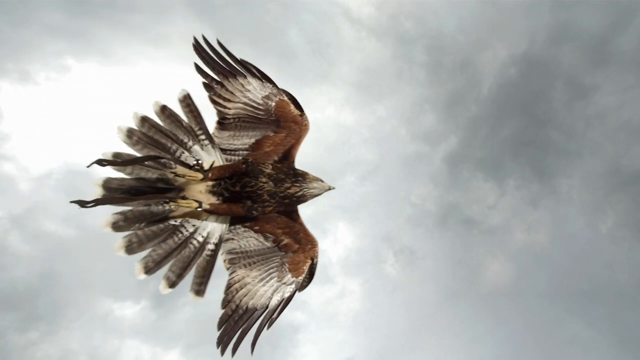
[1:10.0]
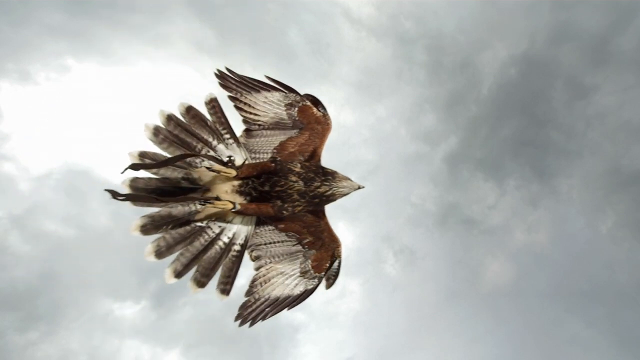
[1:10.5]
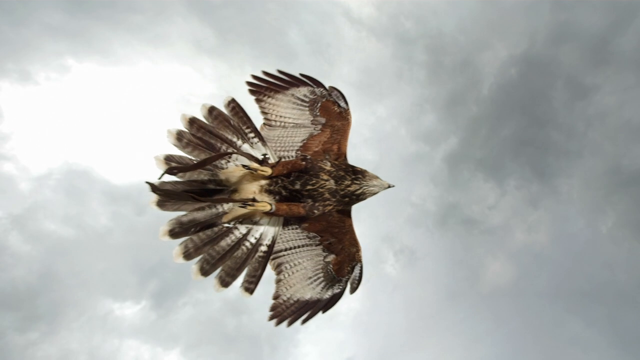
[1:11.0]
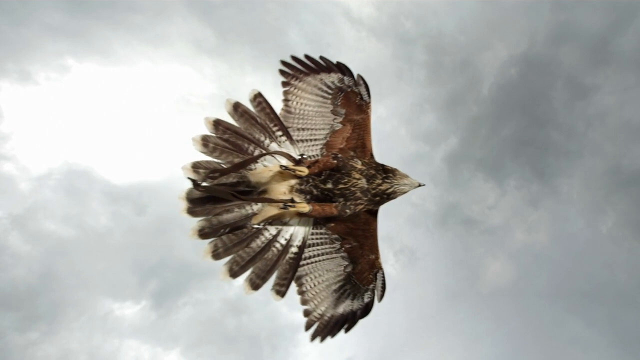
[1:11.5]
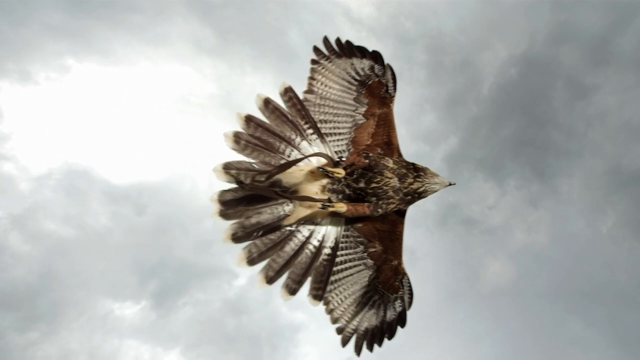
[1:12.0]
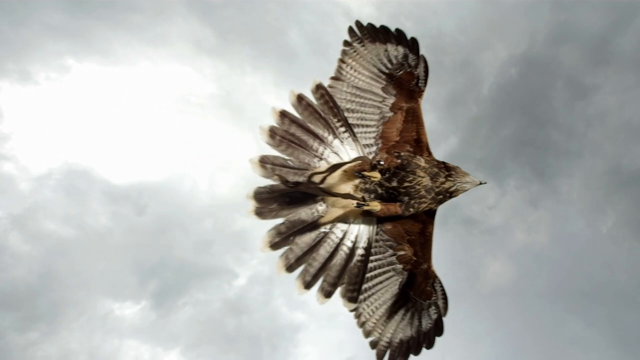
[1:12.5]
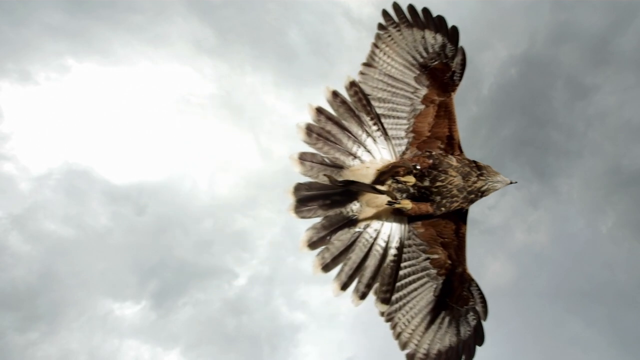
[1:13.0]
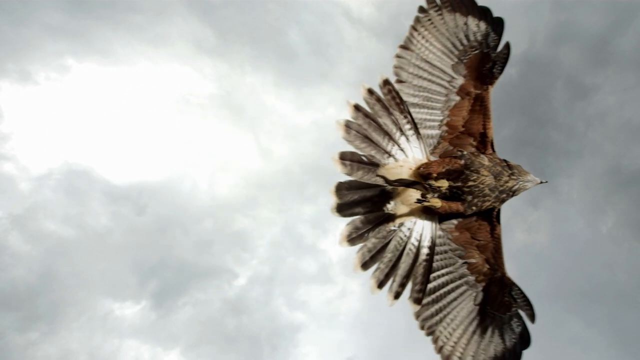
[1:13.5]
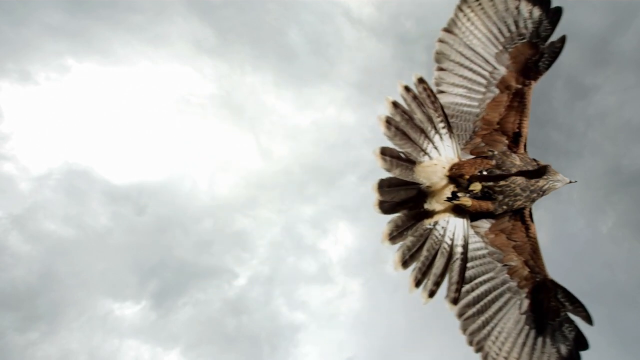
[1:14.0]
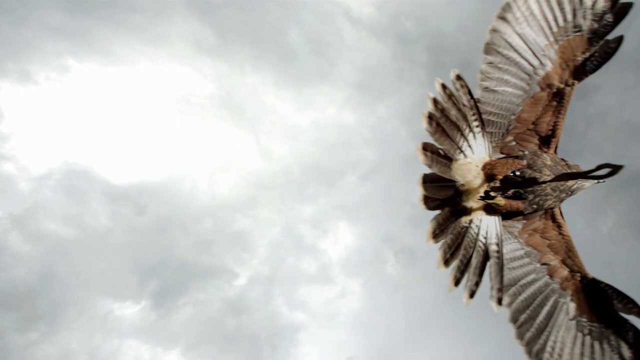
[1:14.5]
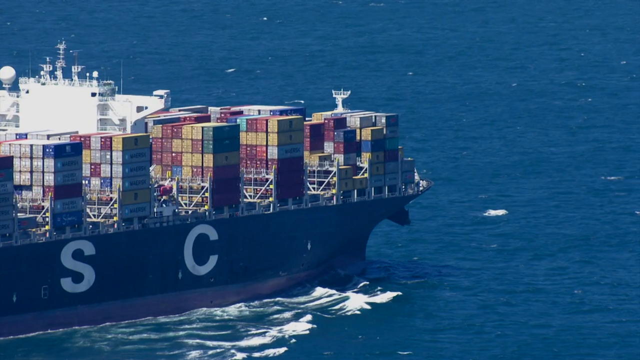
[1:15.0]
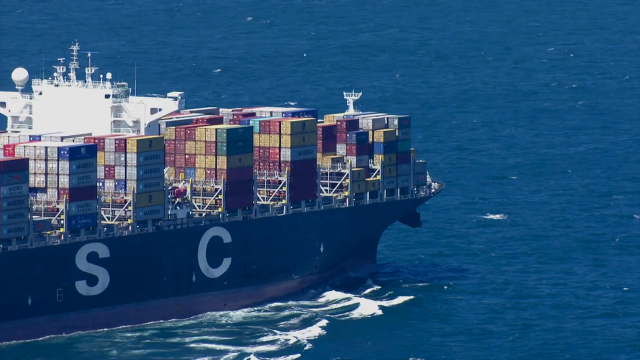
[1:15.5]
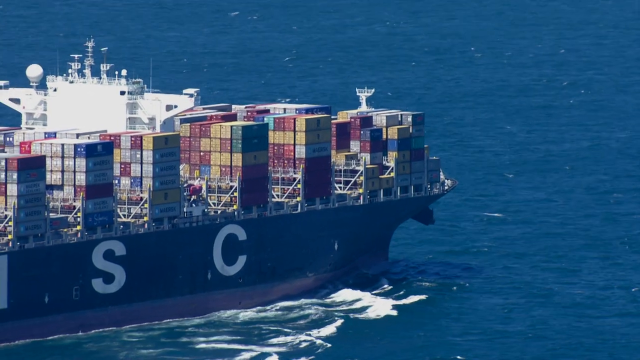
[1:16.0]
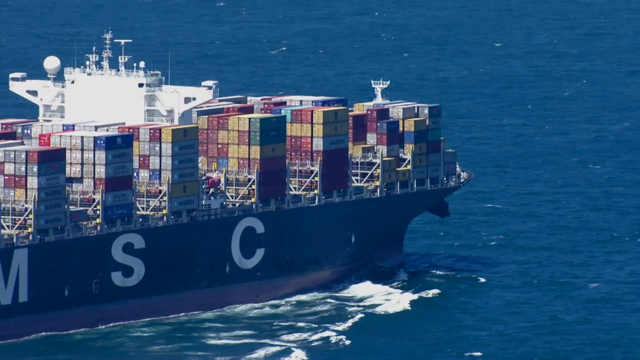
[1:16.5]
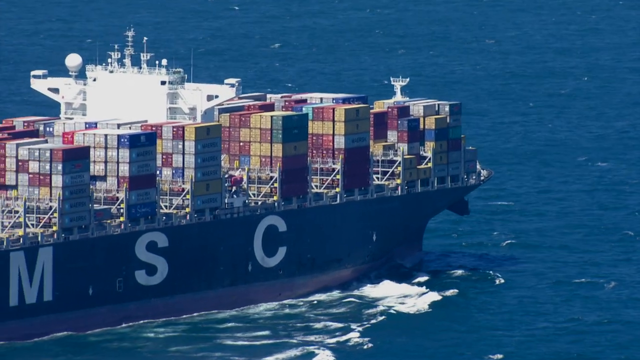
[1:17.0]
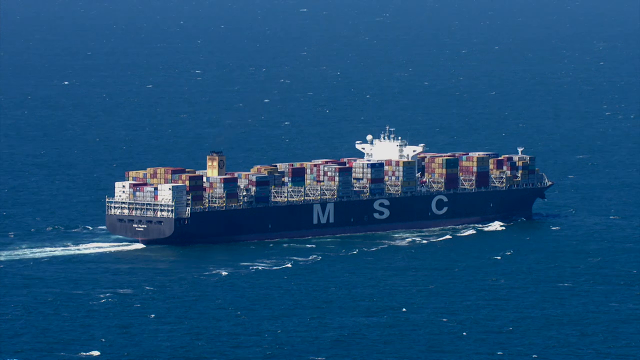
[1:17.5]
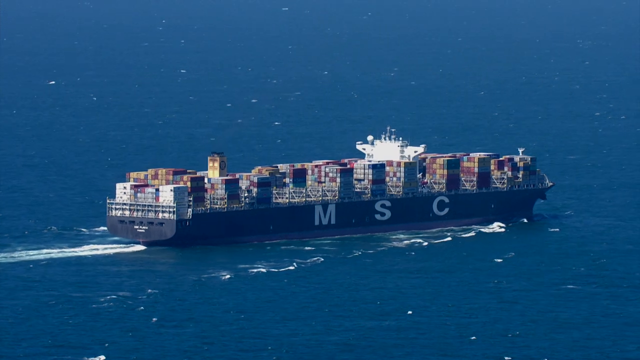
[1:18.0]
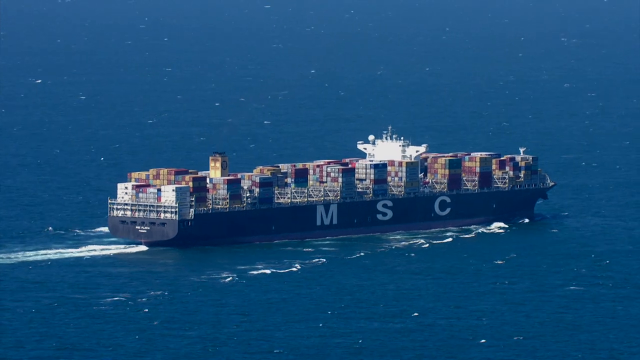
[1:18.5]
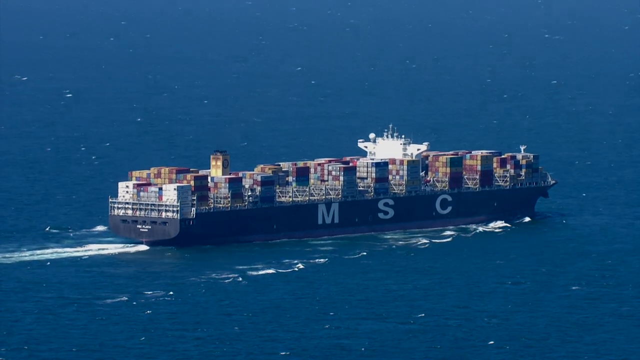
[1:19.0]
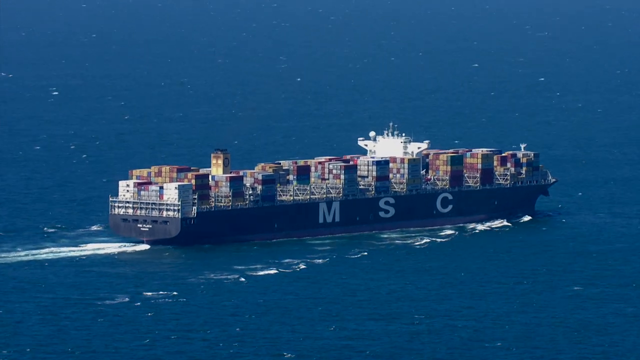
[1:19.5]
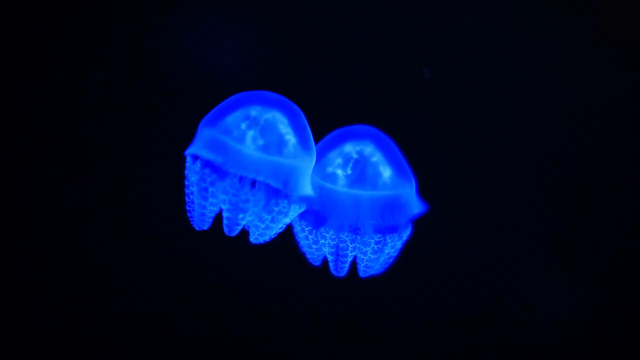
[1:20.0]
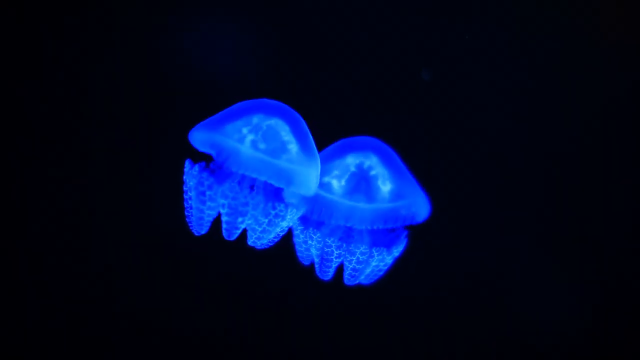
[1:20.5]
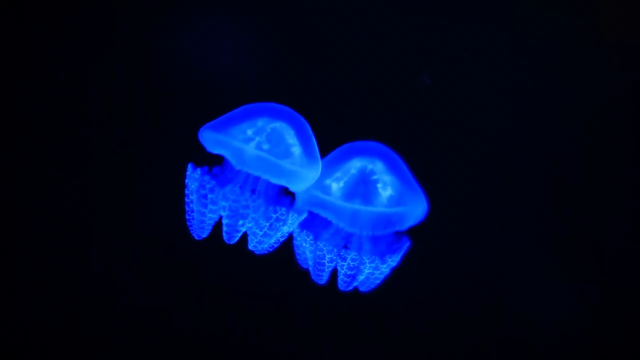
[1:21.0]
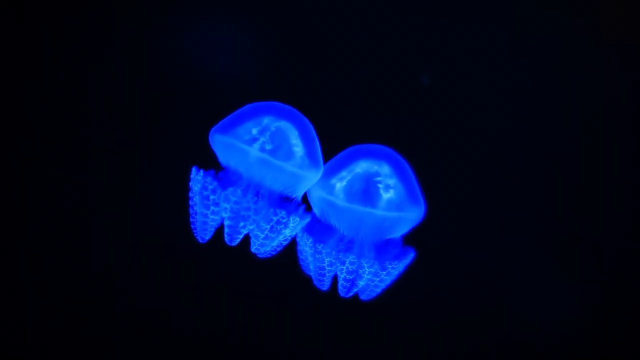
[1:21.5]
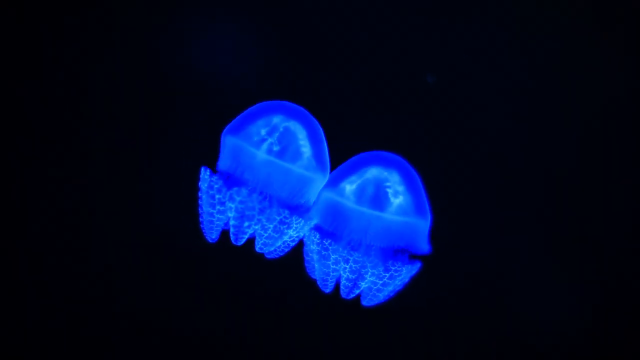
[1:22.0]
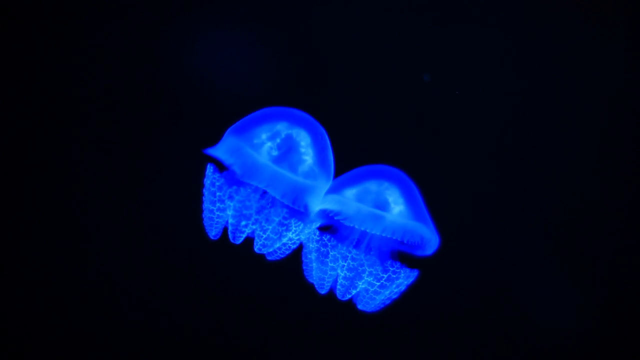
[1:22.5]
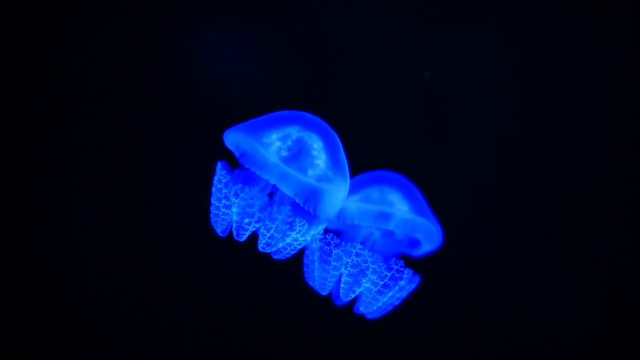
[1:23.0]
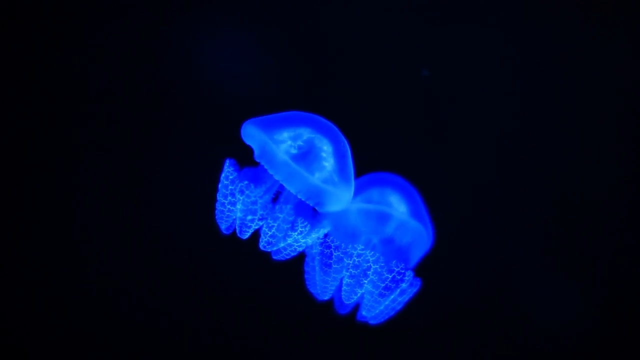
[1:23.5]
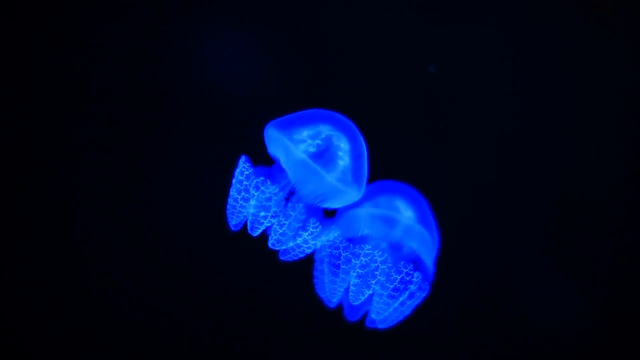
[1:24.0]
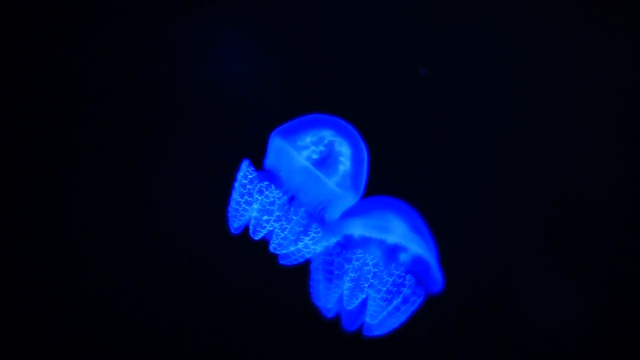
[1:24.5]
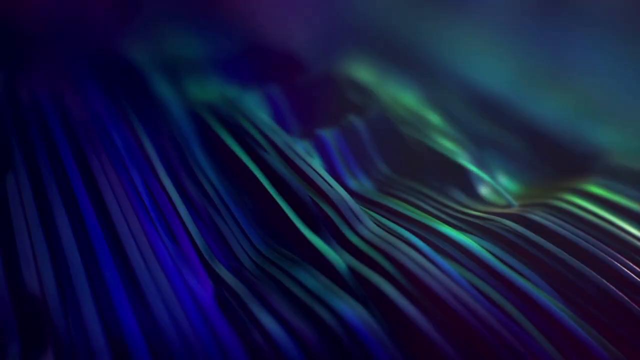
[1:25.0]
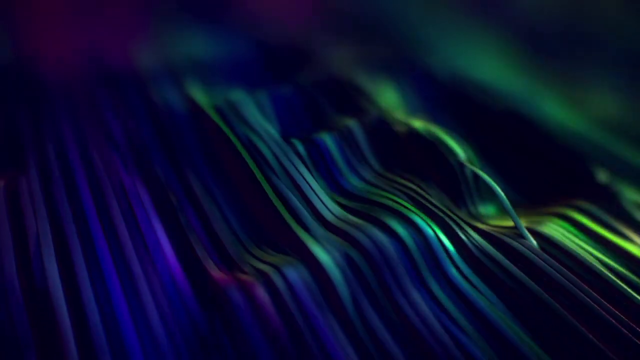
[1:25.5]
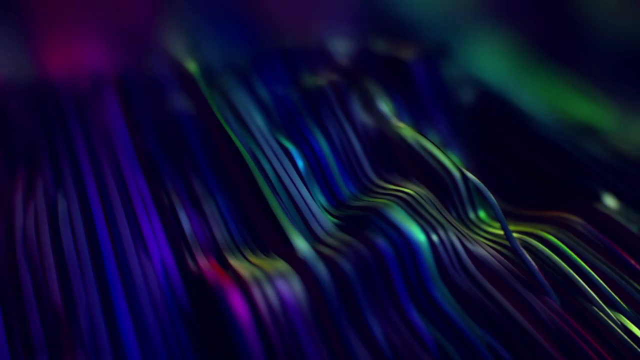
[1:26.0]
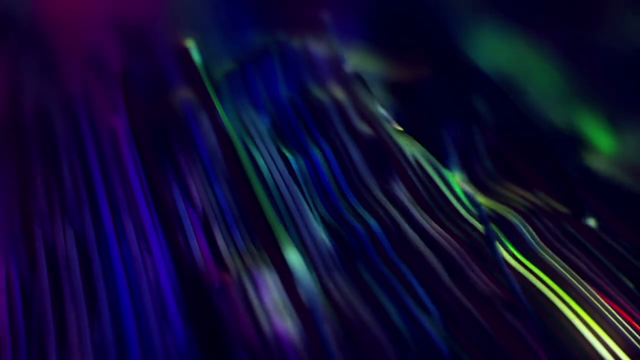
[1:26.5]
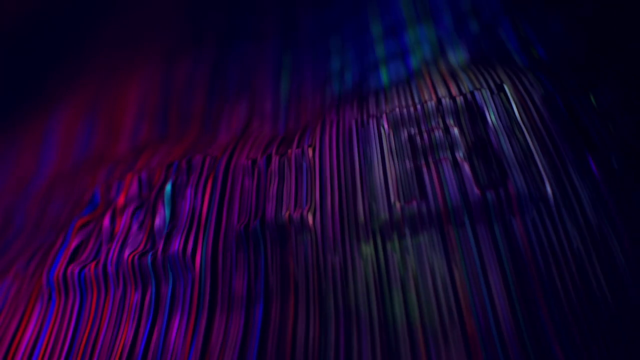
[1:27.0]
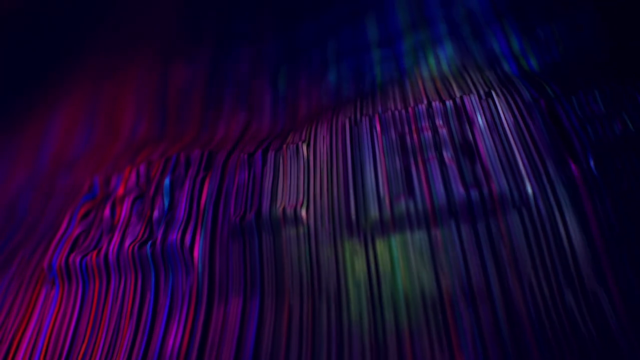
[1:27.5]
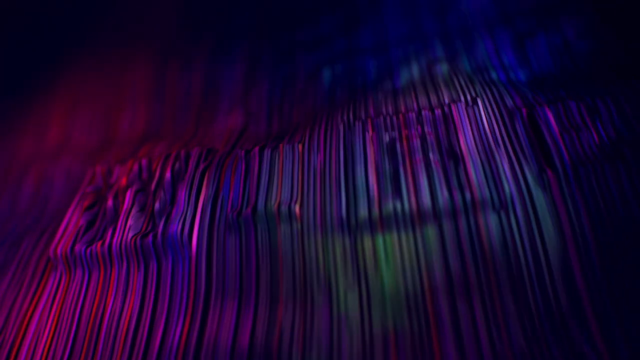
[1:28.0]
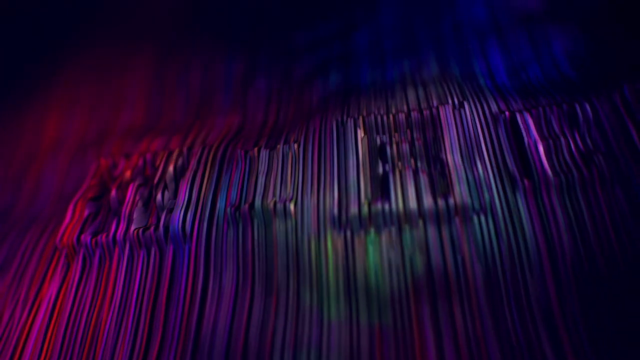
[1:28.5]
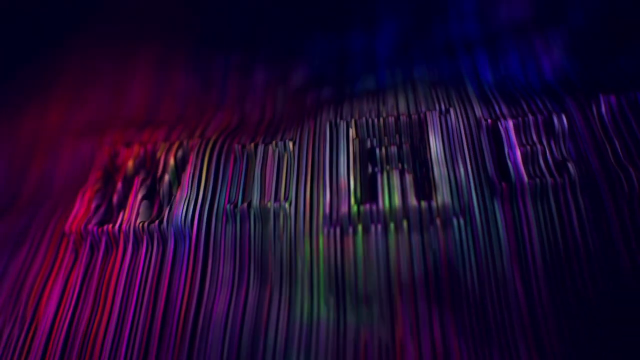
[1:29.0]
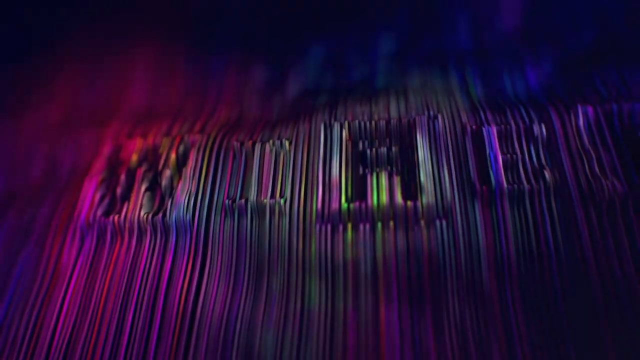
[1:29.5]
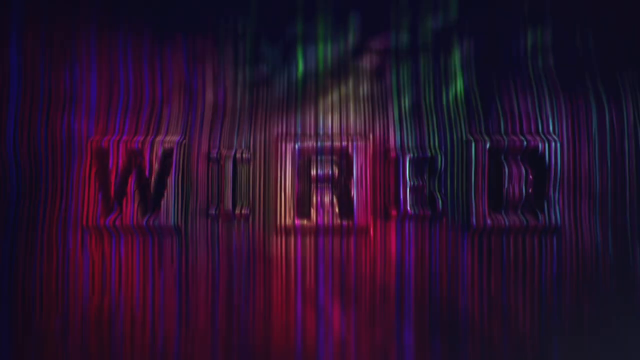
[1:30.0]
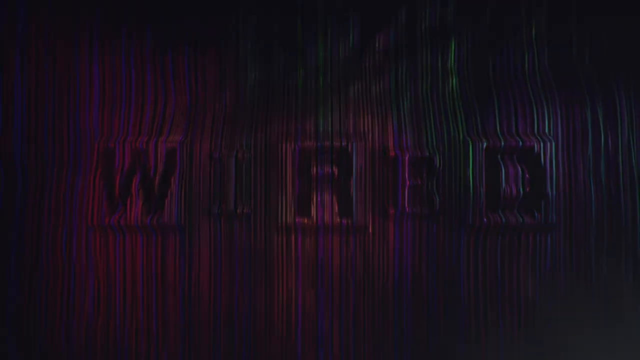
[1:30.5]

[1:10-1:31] An eagle or falcon of some kind flies across the view from left to right, its tail feathers and wings spread as it flaps. The sky behind it is overcast with clouds, and the shot appears to be taken from underneath the bird as it flies overhead. The video transitions to a freight ship with many cargo containers loaded on its deck, moving across the frame from left to right as the shot zooms out to show the whole watercraft with all its cargo. Large lettering across the starboard side of the ship reads "MSC". After the ship continues for a moment, the video moves to a stark black background with two small jellyfish illuminated with blue phosphorescence. Their small domed heads undulate as they move, and their tentacles are somewhat reminiscent of crab legs; the tentacles do not appear to move as much as the domes as they swim. Then a sort of abstract arrangement of colors slowly comes together to form wires laid against one another, and at the end this abstract wire representation spells out the logo "WIRED".